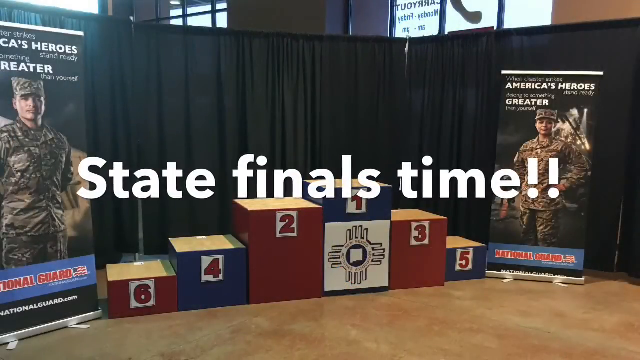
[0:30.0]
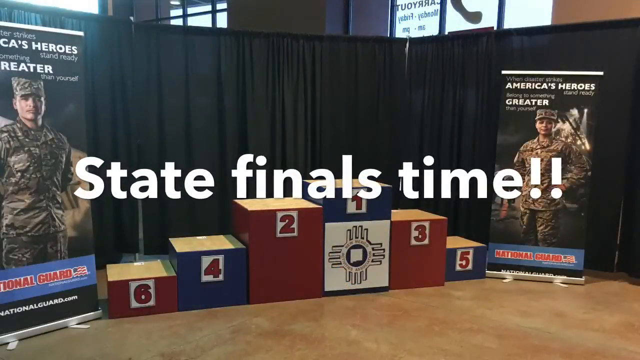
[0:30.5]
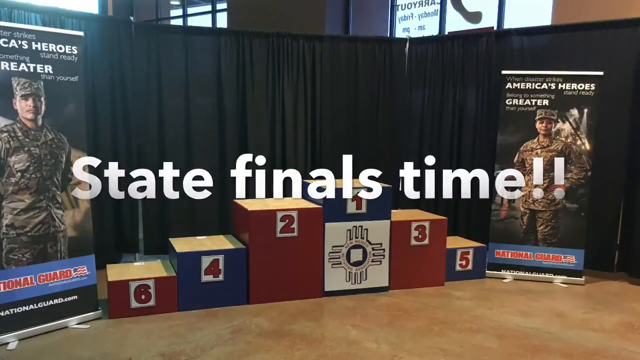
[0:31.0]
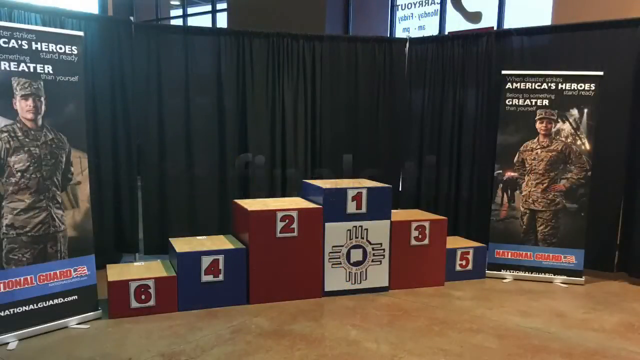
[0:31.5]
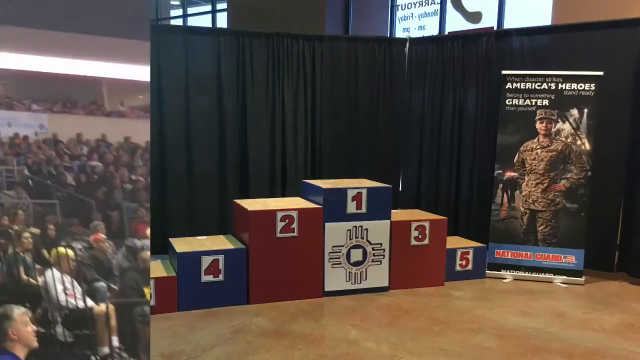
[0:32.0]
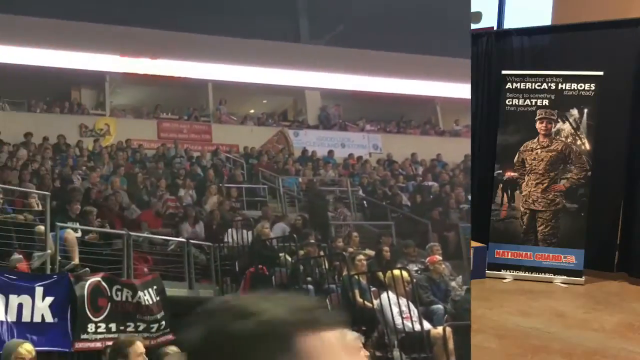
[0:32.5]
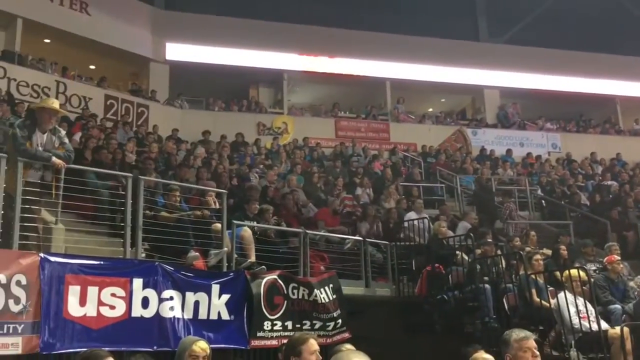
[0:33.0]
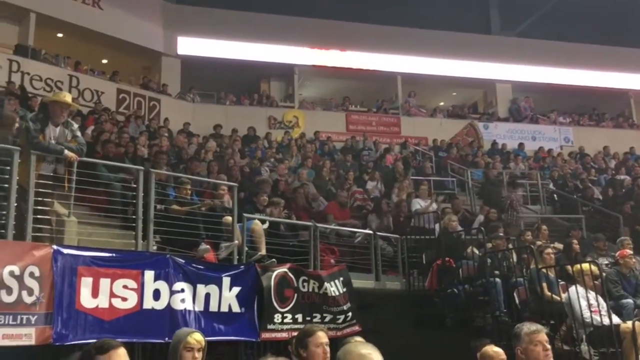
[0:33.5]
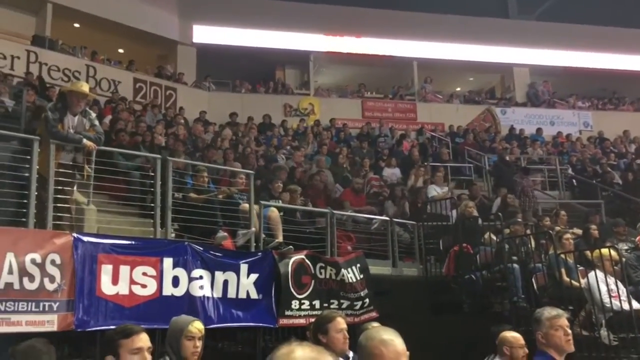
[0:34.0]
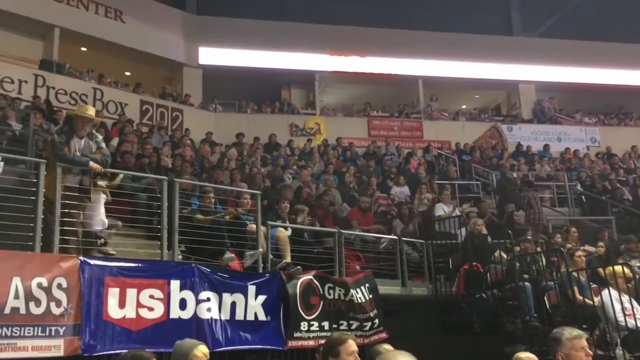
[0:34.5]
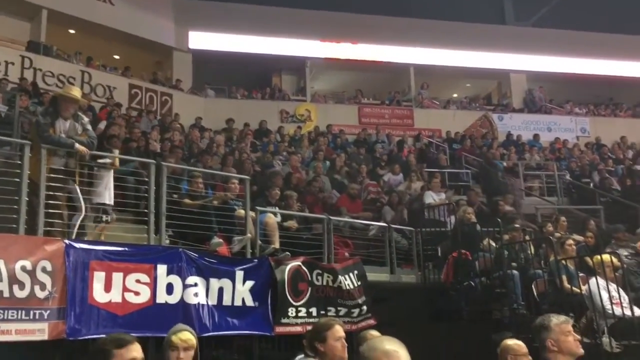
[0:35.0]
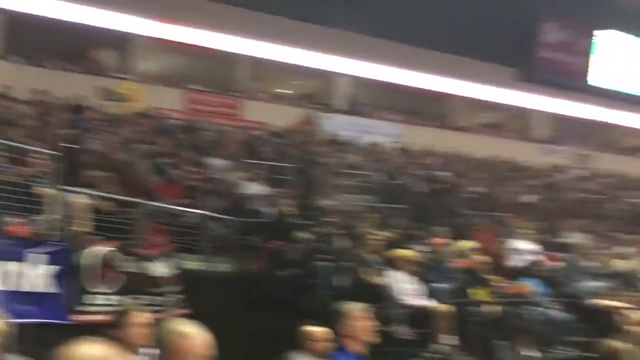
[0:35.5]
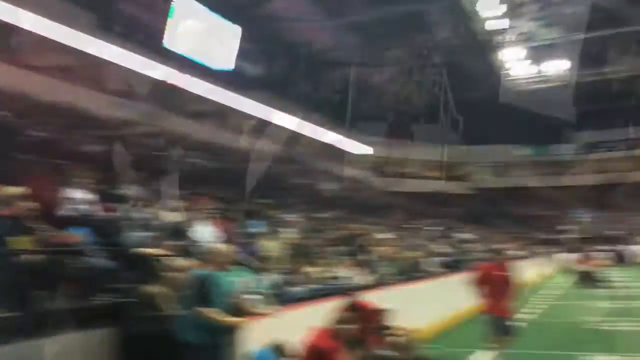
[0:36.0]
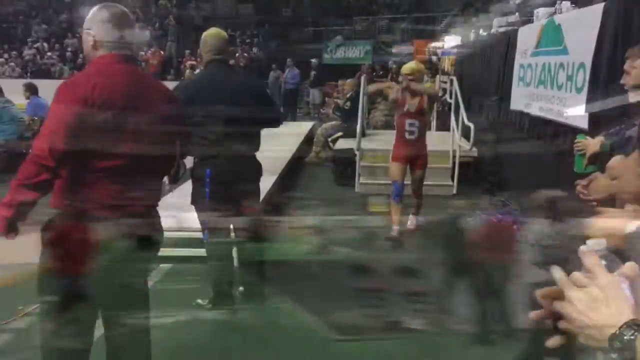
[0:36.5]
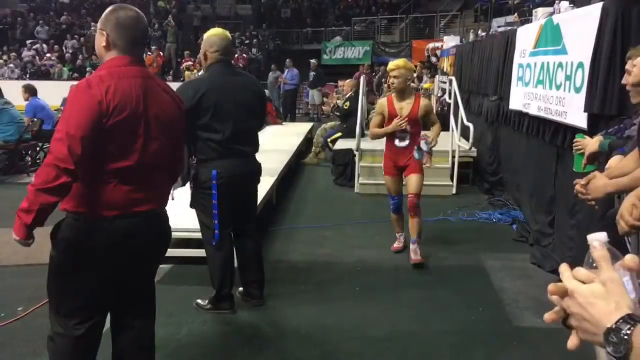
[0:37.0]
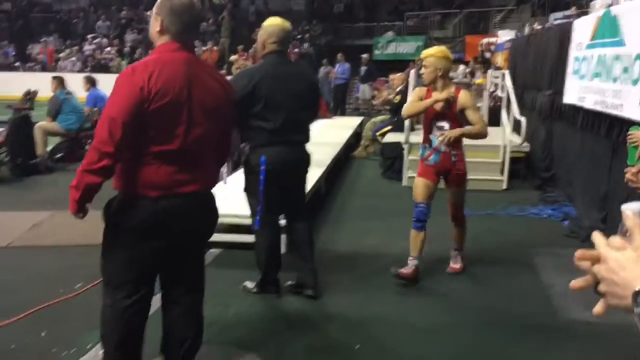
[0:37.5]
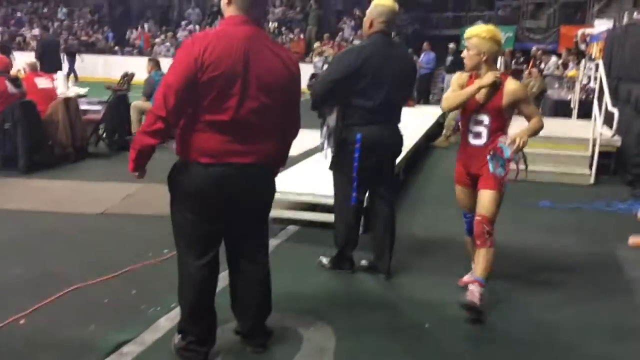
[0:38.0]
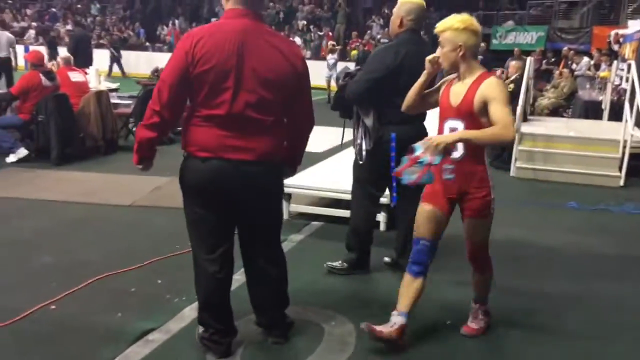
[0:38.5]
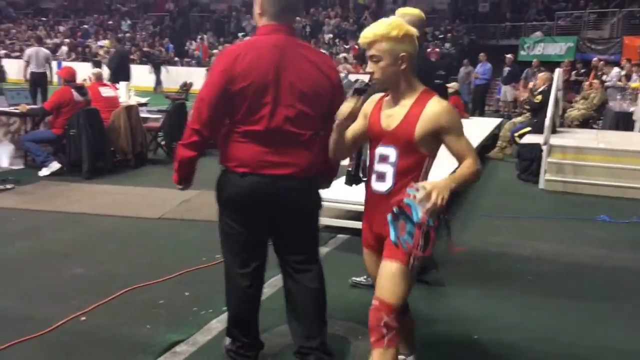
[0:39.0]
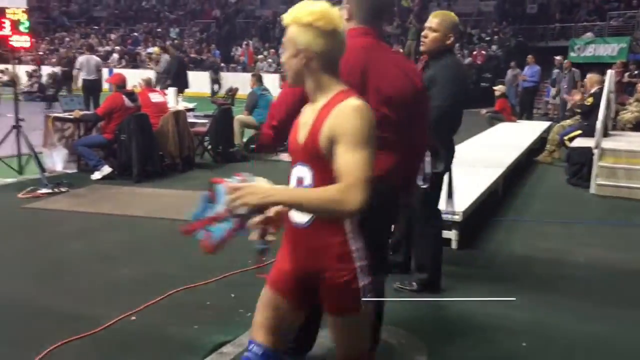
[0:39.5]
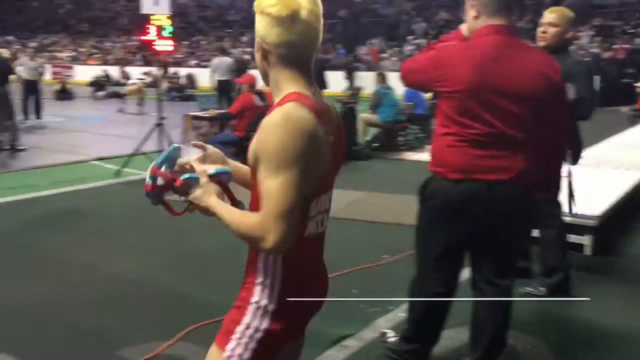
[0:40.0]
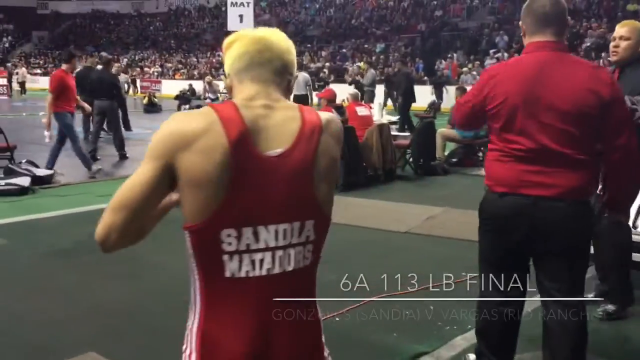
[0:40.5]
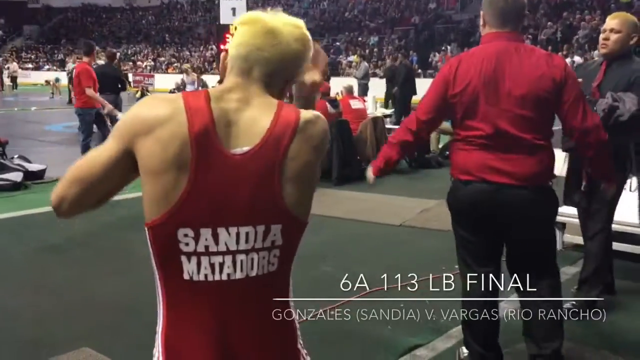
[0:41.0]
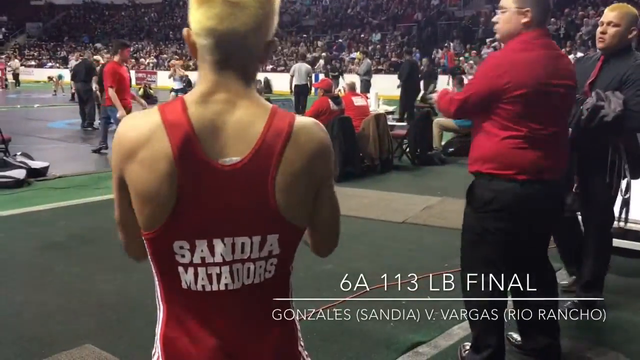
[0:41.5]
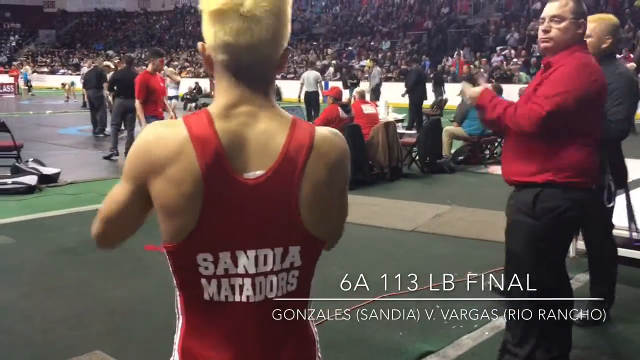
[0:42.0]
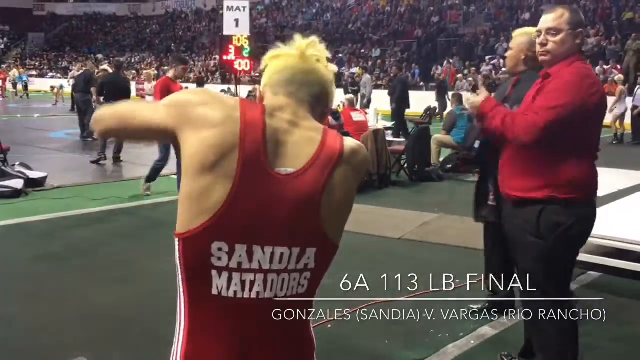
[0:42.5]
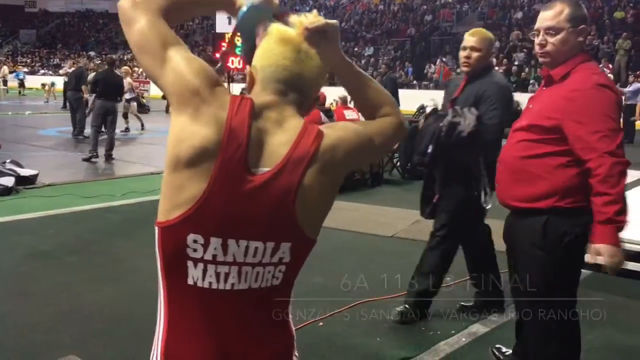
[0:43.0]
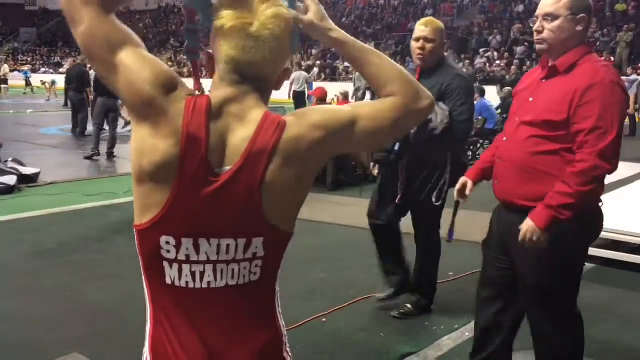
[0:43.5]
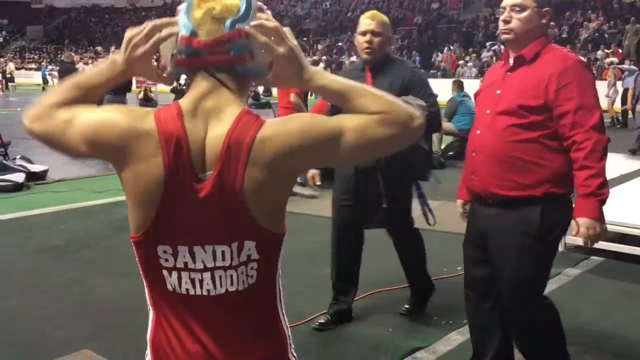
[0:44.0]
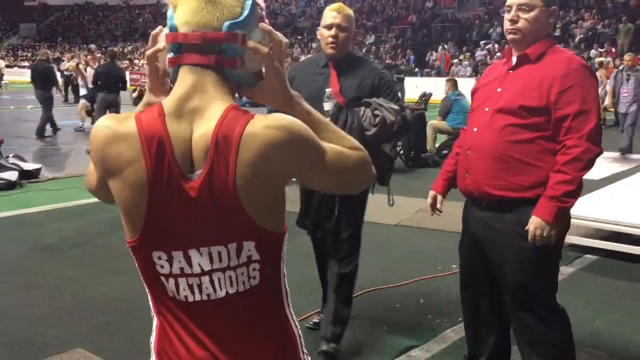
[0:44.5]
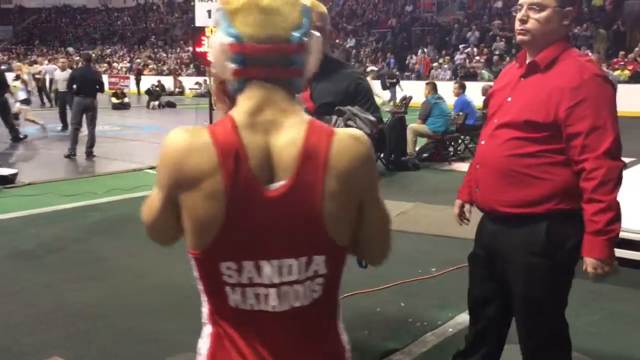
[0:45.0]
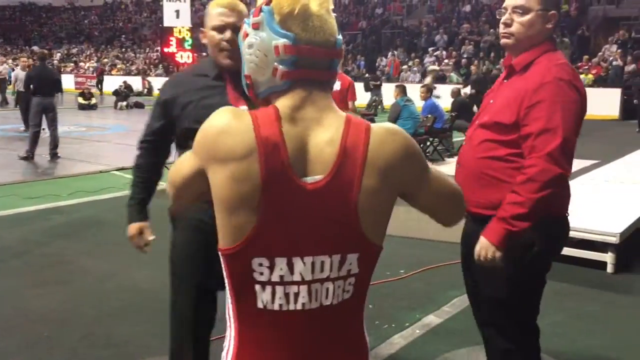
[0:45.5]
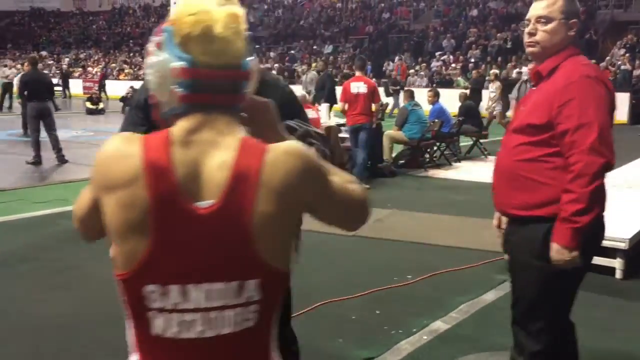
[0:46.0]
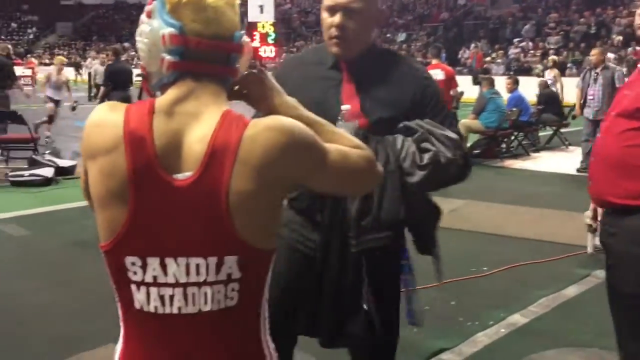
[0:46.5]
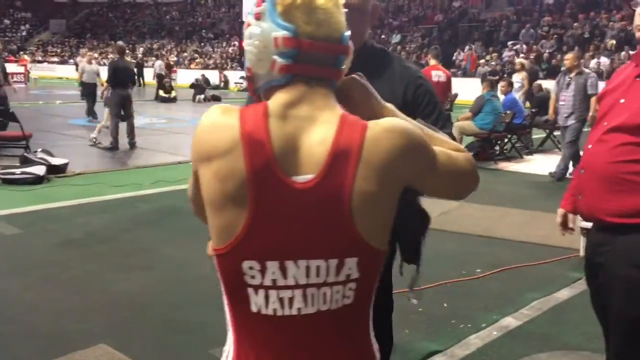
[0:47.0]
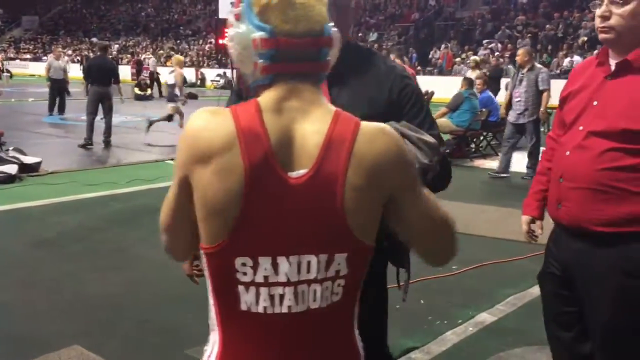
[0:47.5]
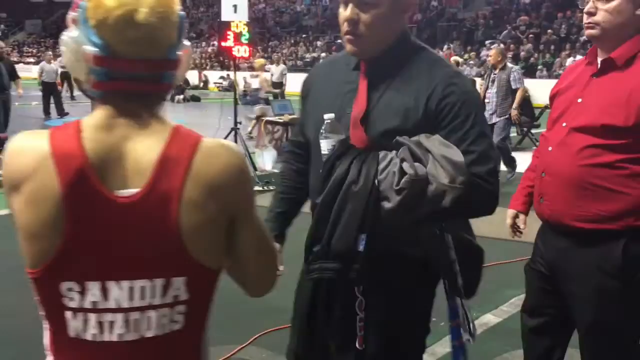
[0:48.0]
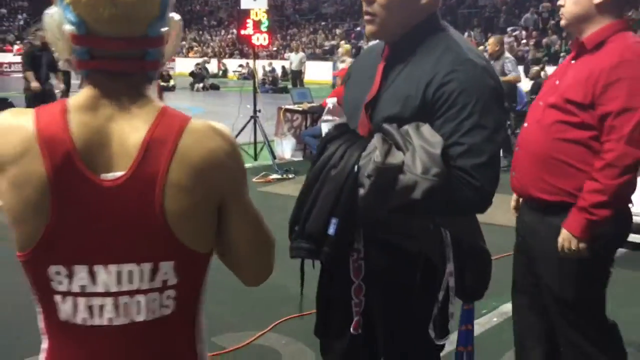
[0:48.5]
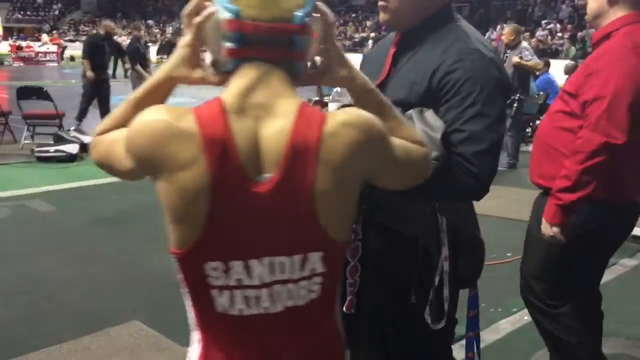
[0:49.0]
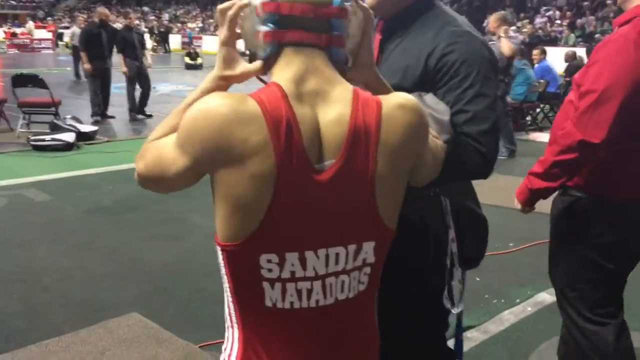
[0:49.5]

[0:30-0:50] A podium has places one through six. The number one place is in the middle and is the highest. To its right are the number three and number five places, two steps down, and to its left are the two, four and six spots, each one step down, so each spot is a little higher as the numbers get smaller. The New Mexico state symbol is in the middle of the podium. The video then transitions to a large indoor stadium, where people in the audience clap and cheer as wrestlers come out onto the mats. A wrestler is getting ready, putting on a semi helmet that protects his ears.